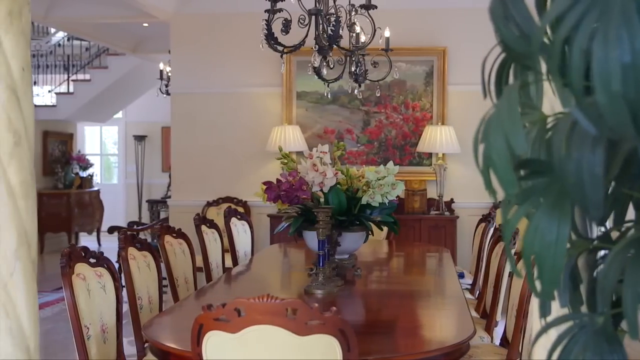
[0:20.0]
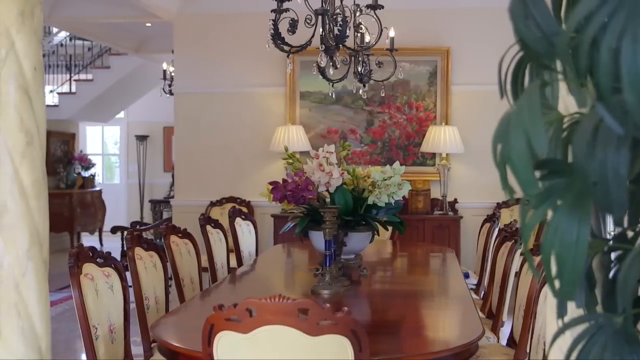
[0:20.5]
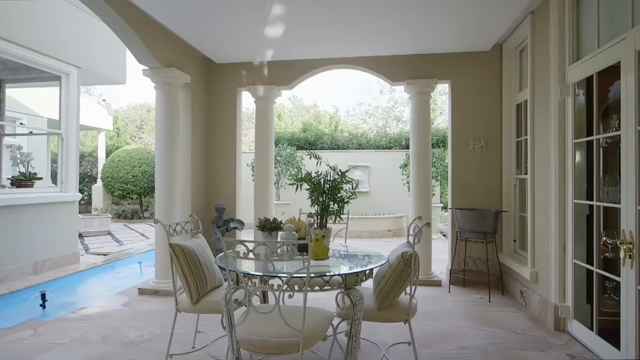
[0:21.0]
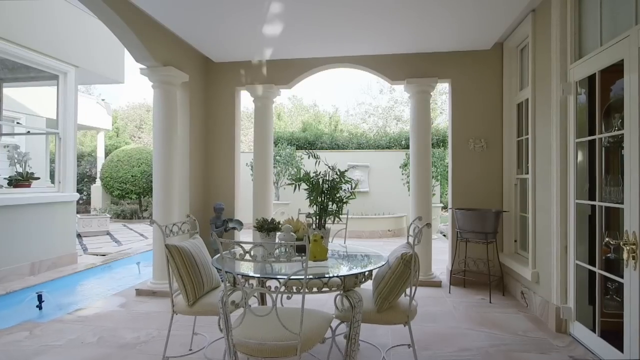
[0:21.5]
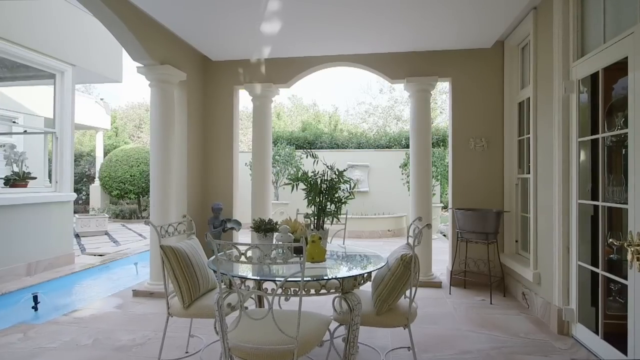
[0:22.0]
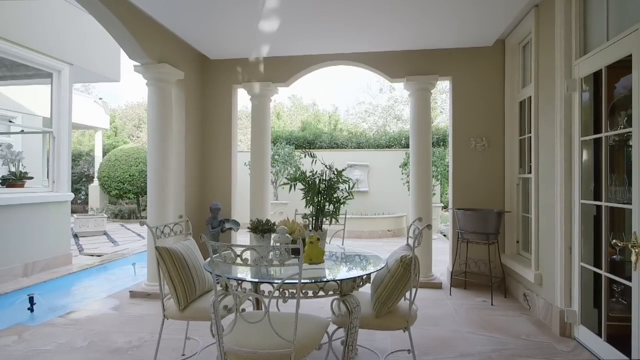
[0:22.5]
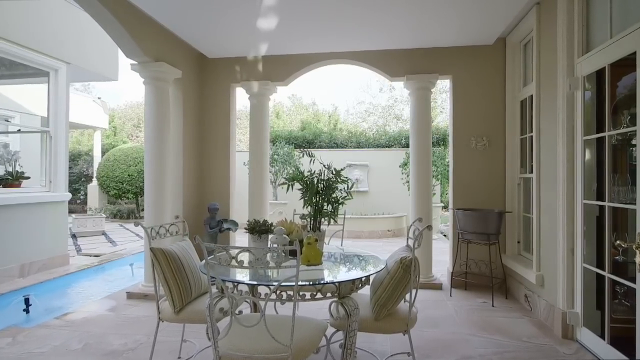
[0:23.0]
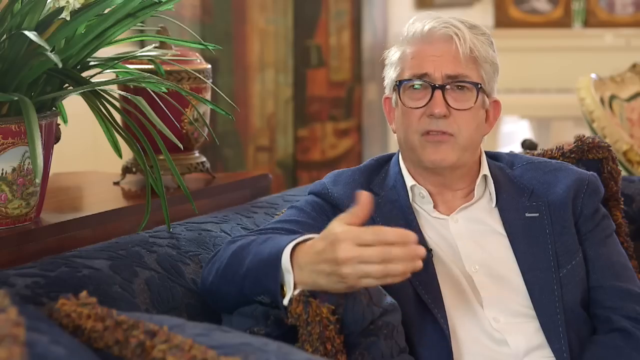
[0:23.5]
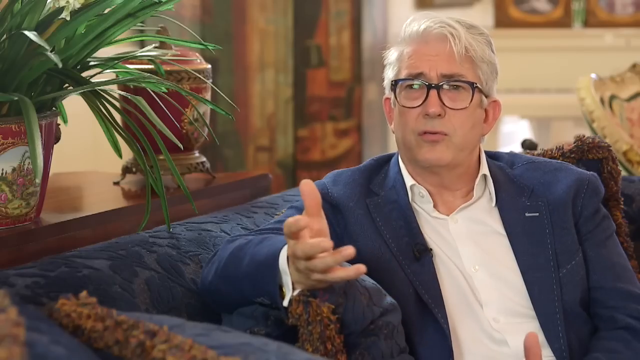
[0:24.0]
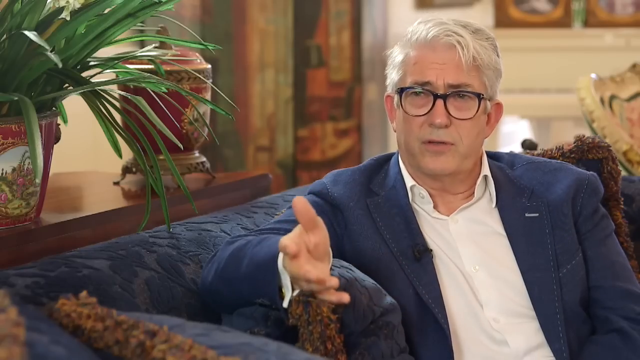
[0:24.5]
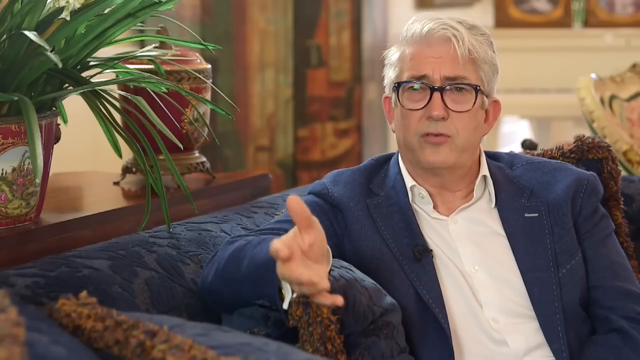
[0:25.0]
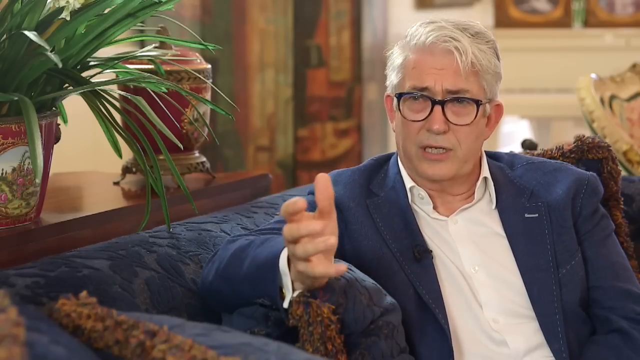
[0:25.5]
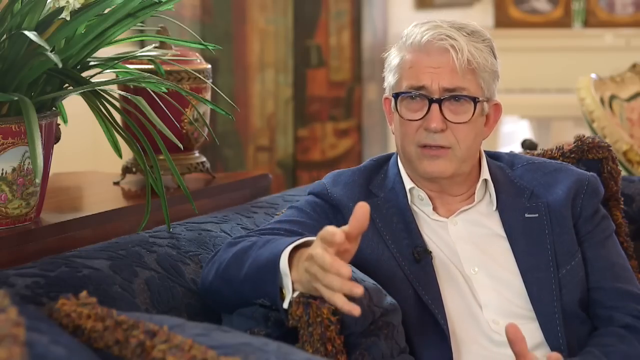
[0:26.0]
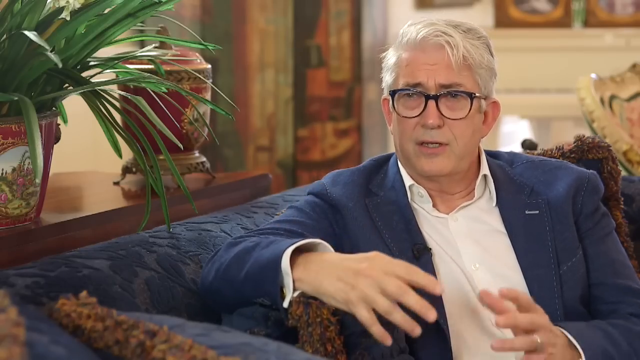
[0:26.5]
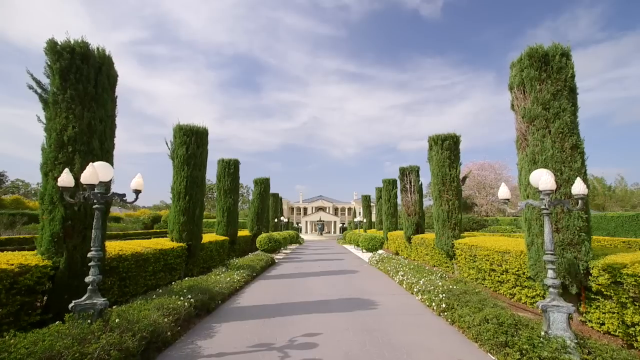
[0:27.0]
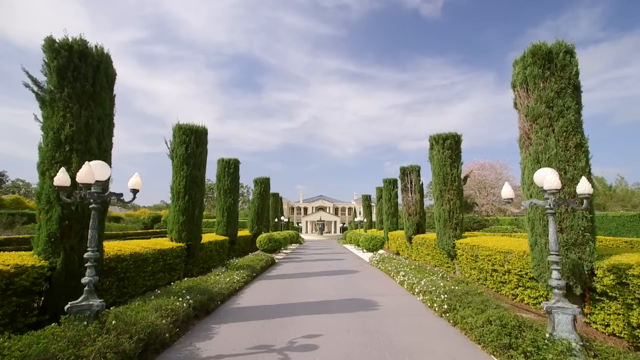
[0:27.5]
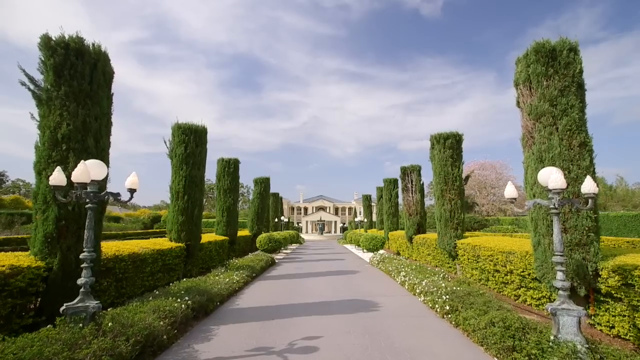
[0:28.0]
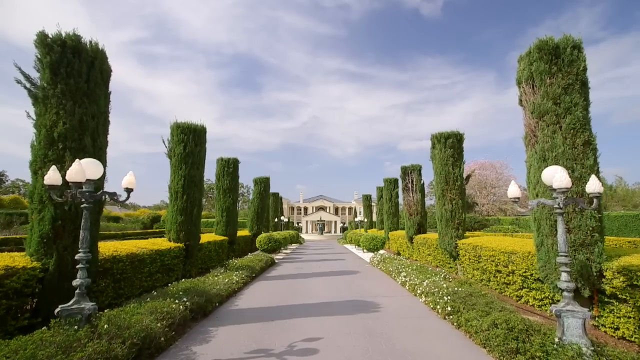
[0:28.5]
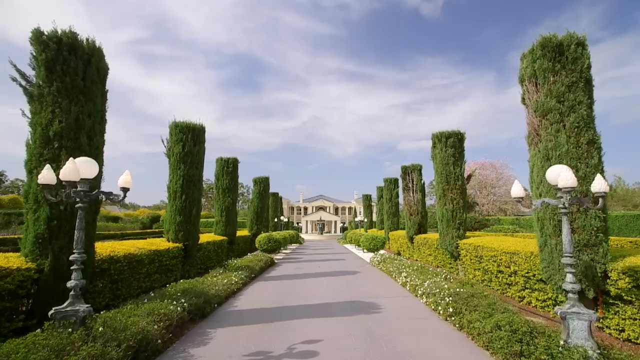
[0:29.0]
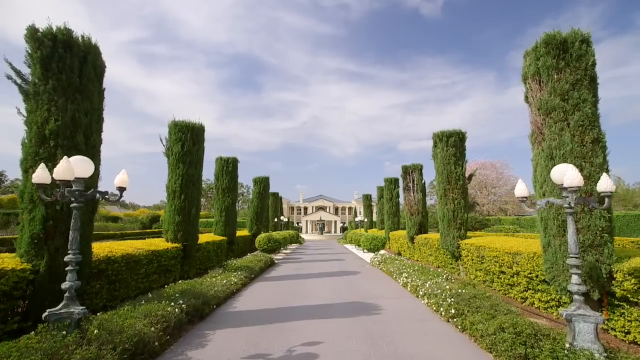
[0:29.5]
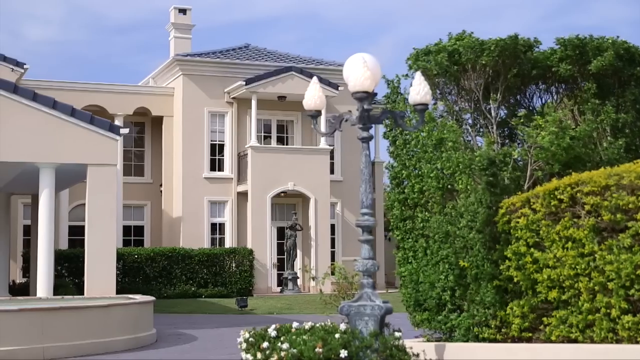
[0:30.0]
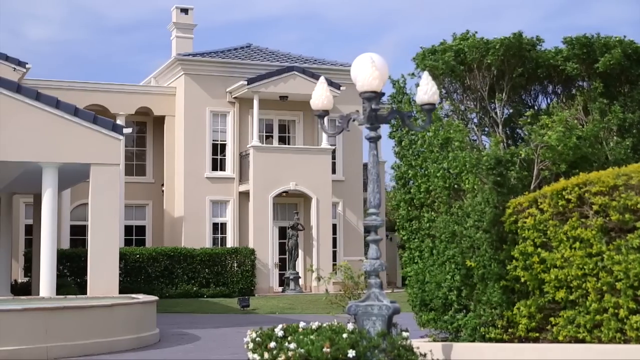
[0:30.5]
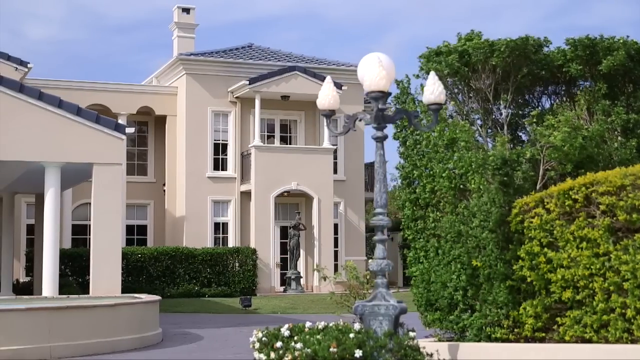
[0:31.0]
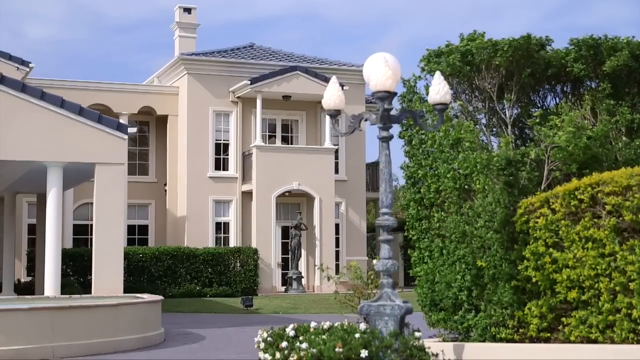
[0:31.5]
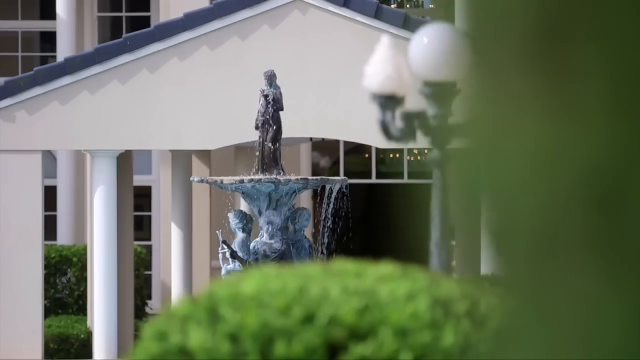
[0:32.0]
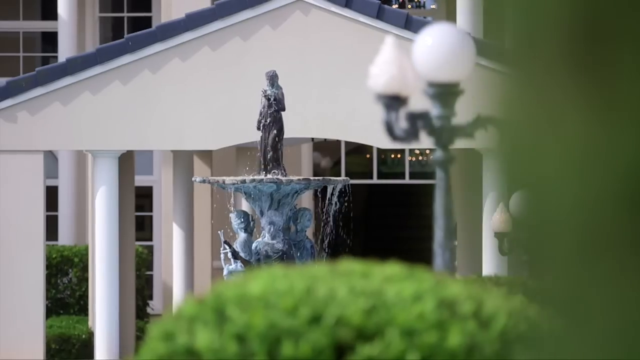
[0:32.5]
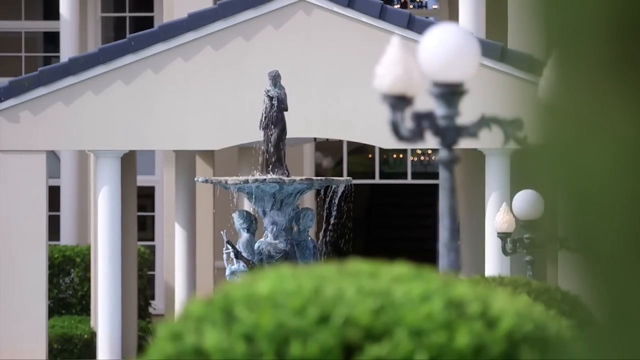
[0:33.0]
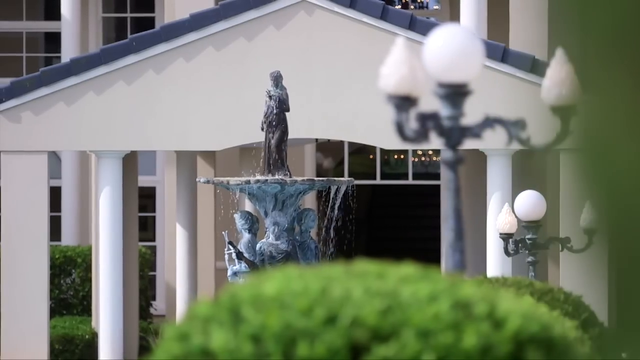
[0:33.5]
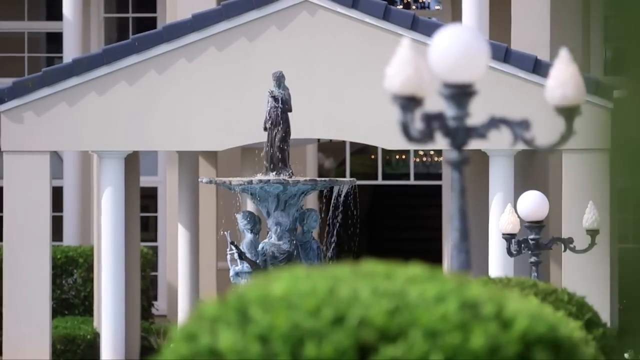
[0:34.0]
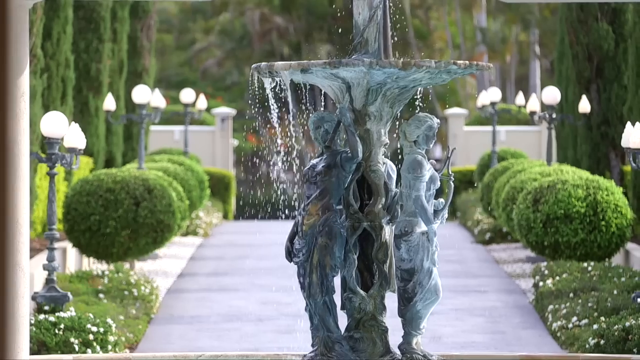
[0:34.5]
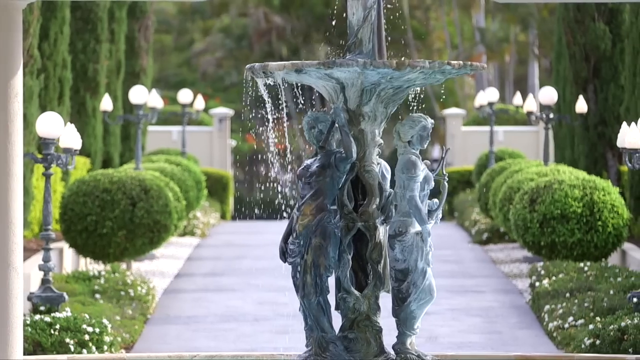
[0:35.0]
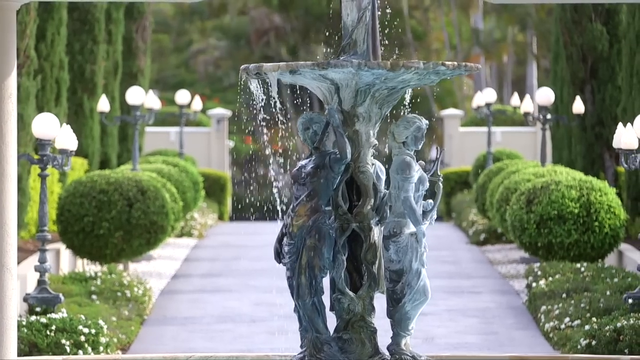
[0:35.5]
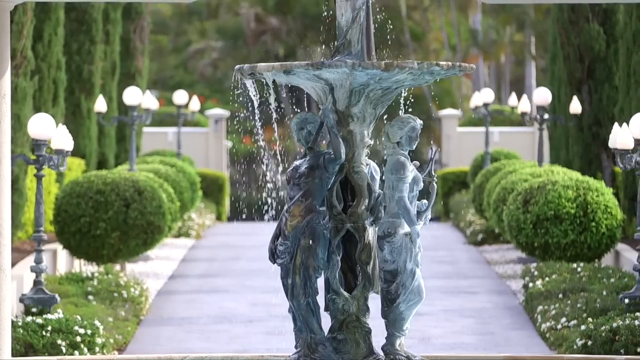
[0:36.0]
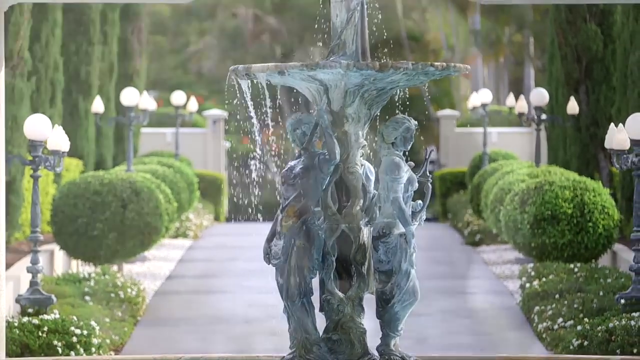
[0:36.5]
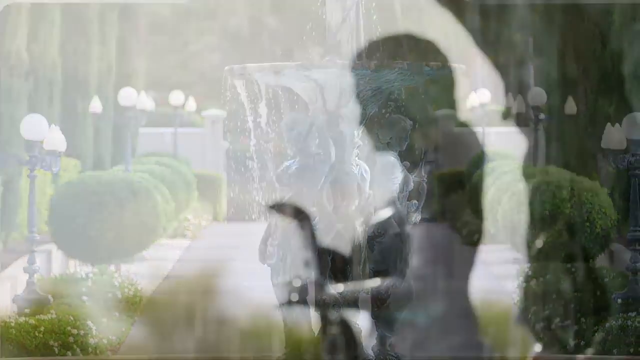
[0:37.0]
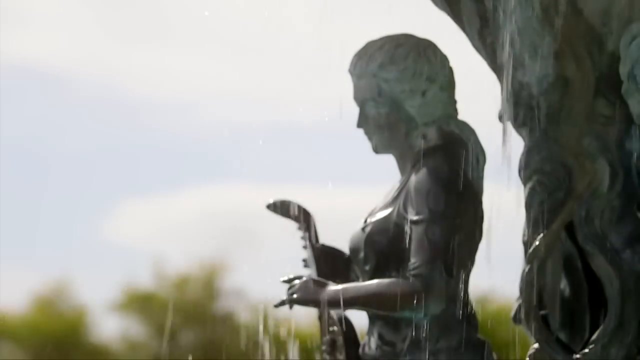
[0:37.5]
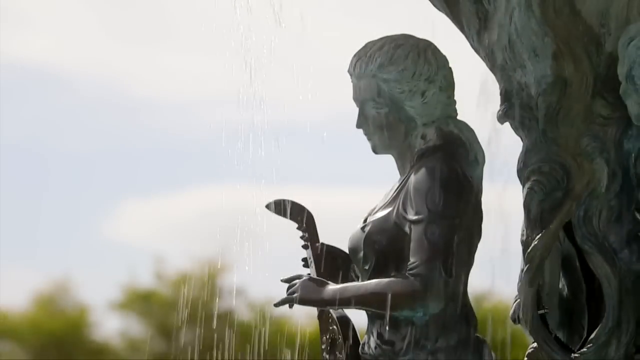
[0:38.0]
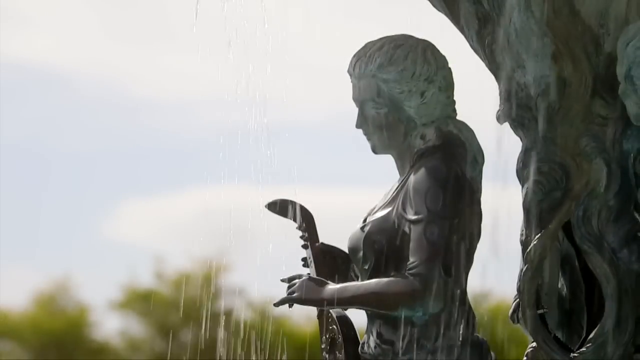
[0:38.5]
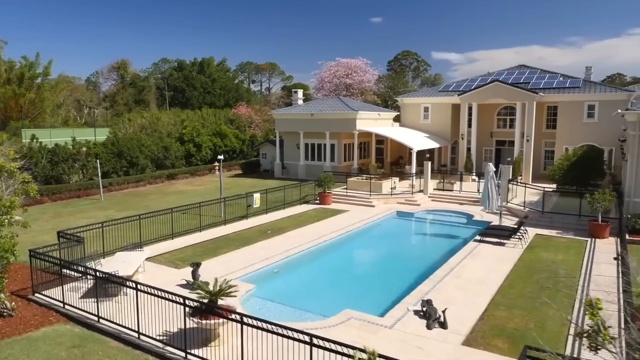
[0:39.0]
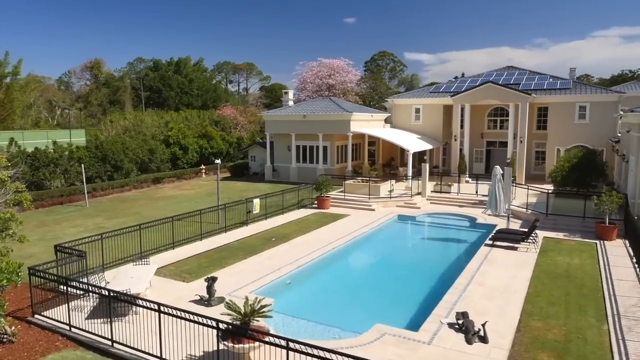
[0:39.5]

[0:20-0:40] The interior of the house continues to be shown, with about 10 chairs around a wooden table. Photographs on the walls decorate the home, and a black-like chandelier hangs above the wooden table, which has flowers on it. Outside, on the porch, there are two chairs and a glass table with flowers and vases. The video then switches to a white man with white hair, wearing glasses, a blue blazer and a white shirt, seated inside a house; next to him is a flower in a china vase. The outside of the house is shown one more time, with the road leading towards it and tall green trimmed plants appearing to be on each side of the road. Then the video again shows the closer view of the house.